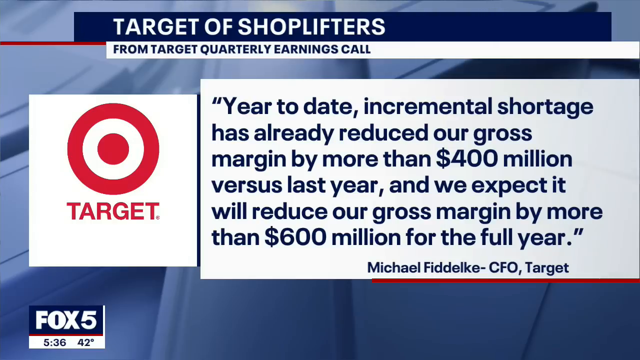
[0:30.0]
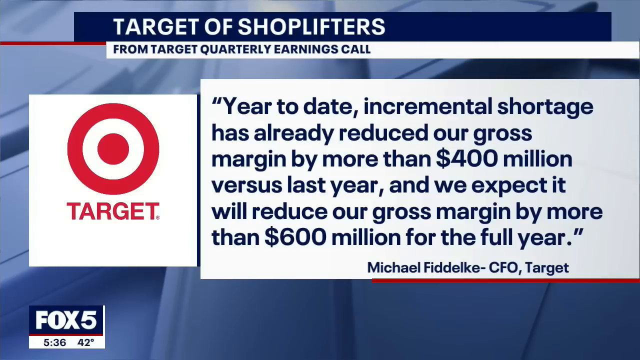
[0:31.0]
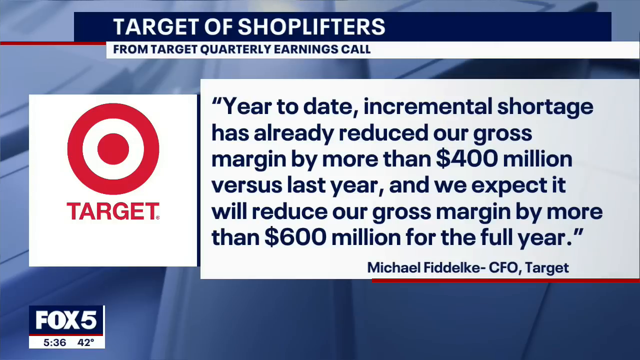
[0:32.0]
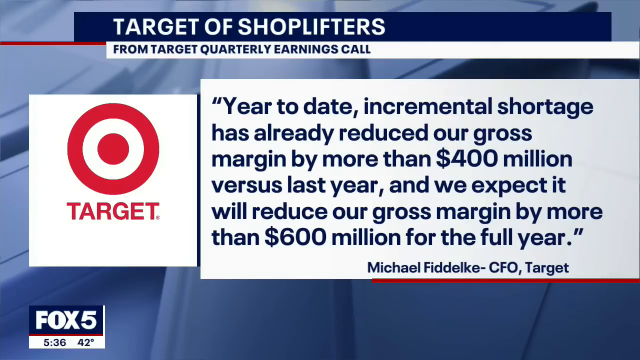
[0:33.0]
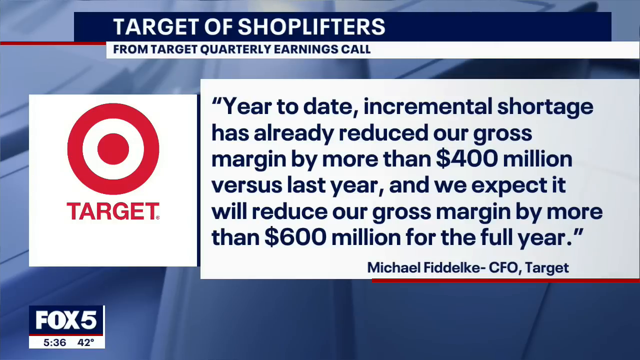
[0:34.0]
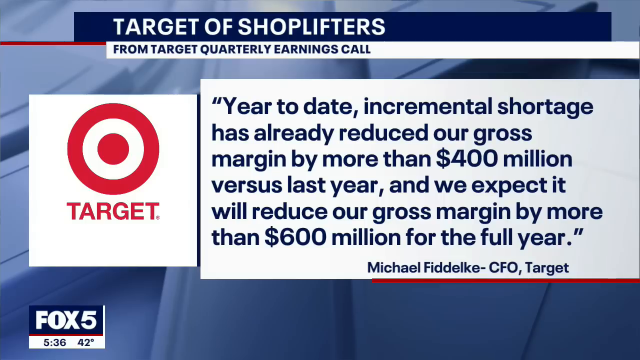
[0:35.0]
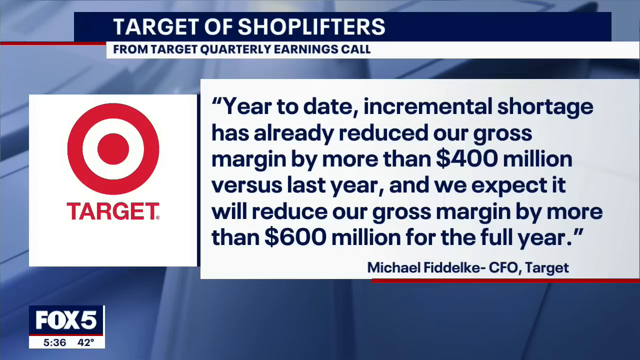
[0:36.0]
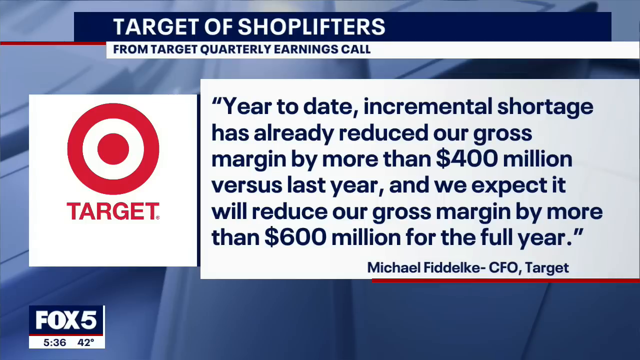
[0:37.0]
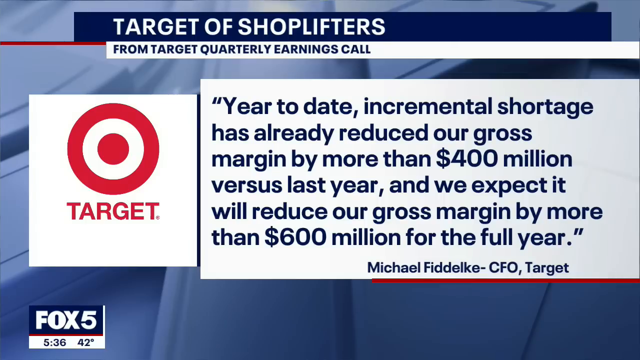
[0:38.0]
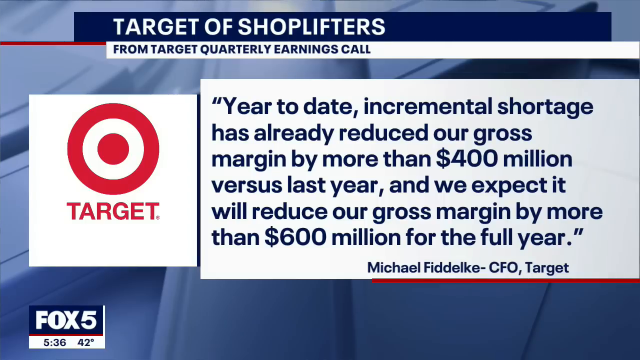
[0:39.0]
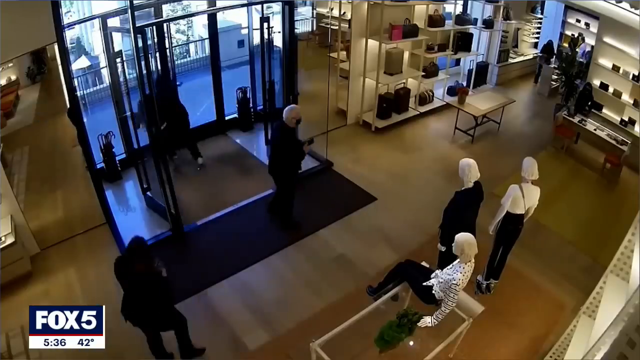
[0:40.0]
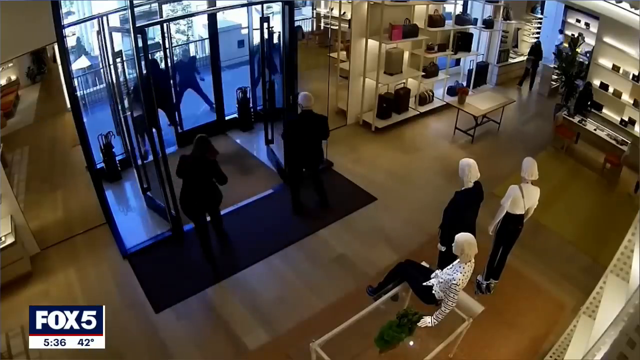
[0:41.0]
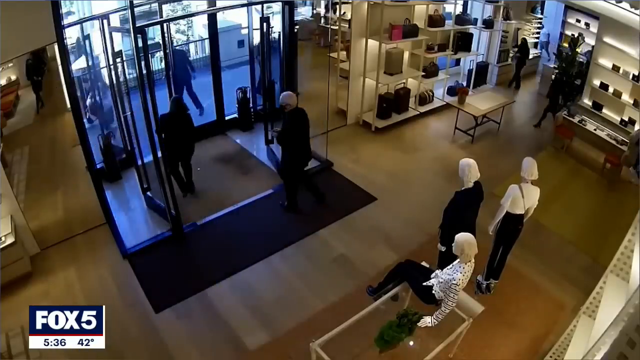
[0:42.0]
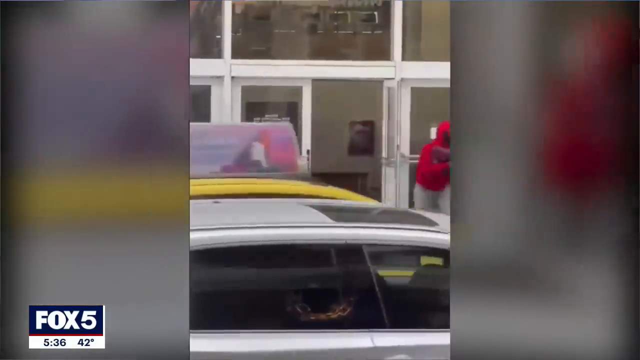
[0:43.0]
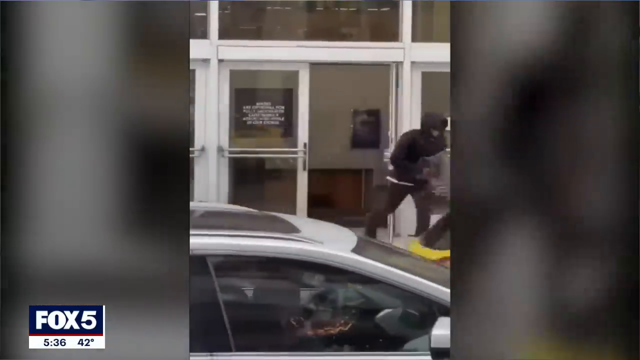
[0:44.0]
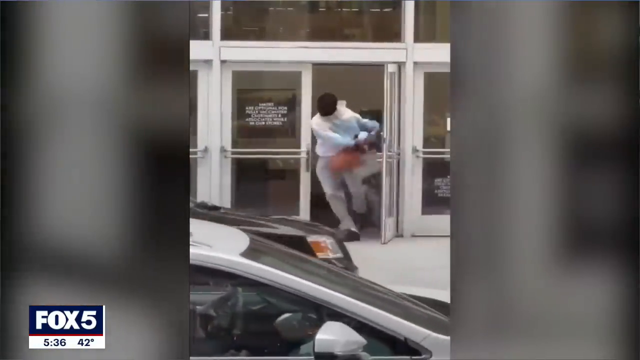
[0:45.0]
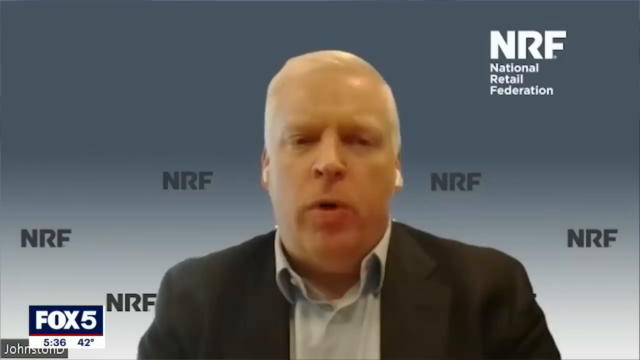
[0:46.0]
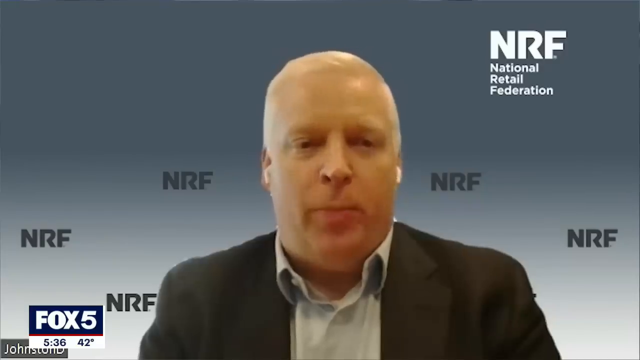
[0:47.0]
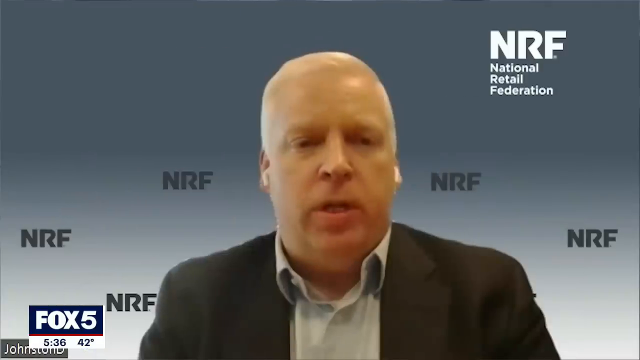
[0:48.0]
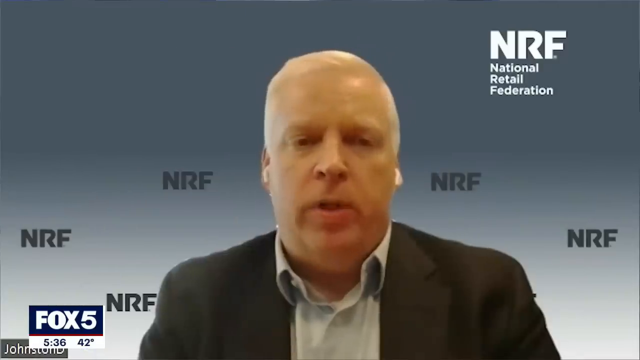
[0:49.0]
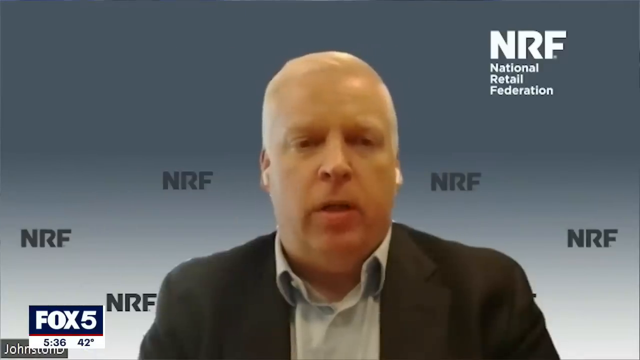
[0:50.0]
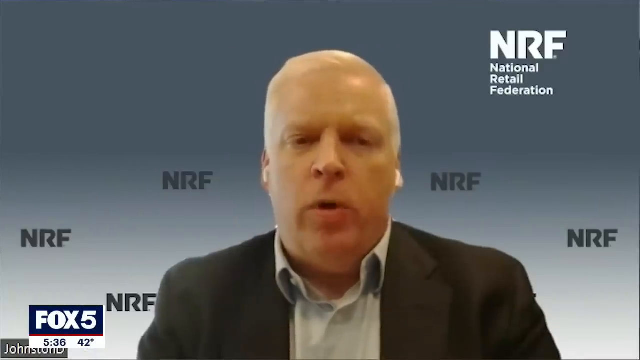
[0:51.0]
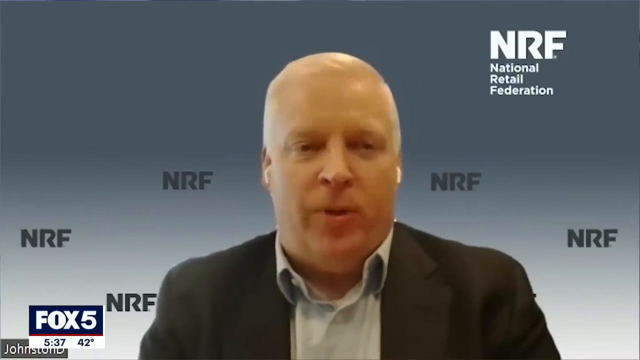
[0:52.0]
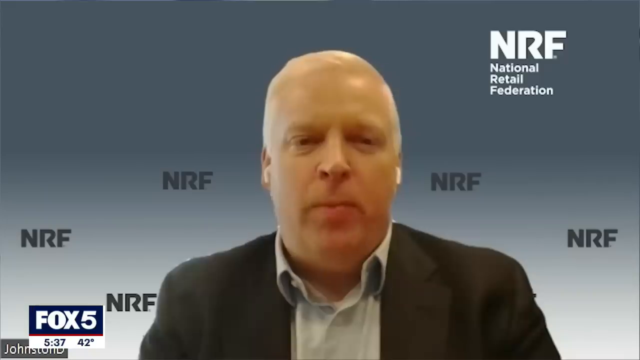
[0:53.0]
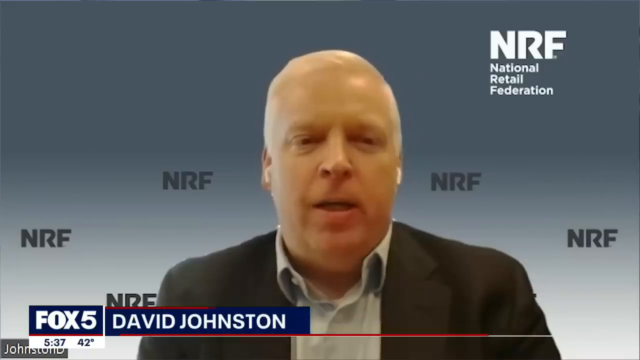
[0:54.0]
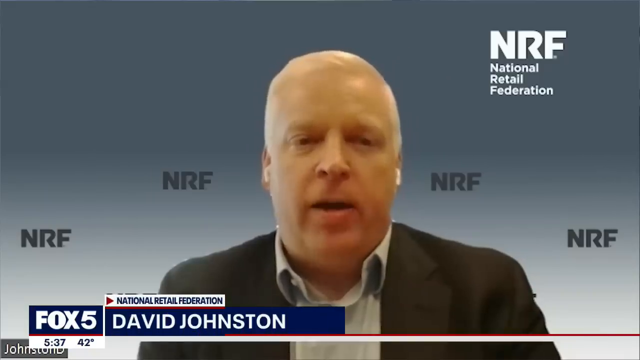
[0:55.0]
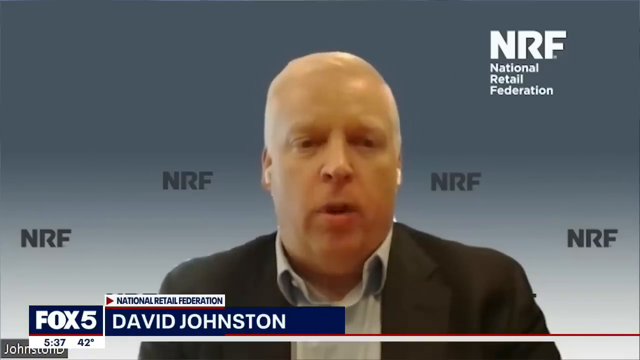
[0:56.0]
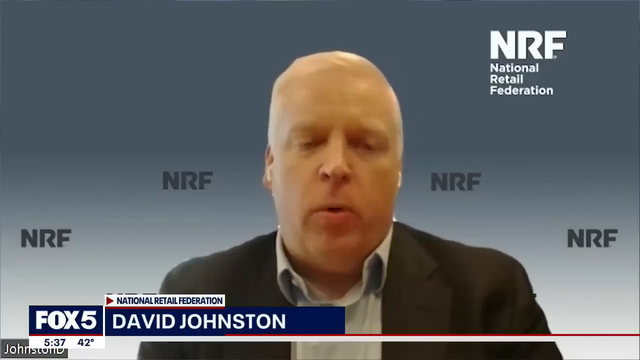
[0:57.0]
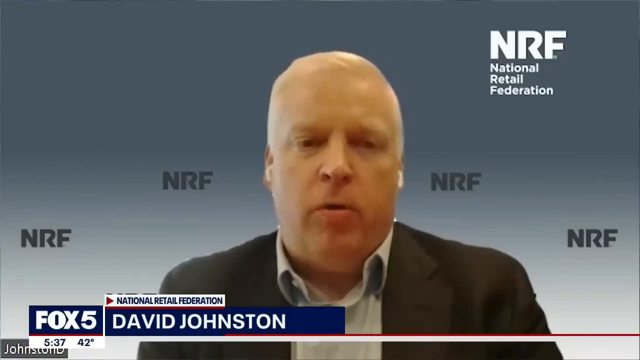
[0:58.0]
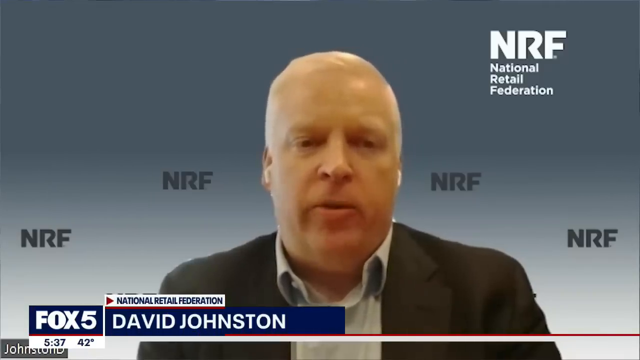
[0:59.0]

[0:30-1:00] A headline at the top reads "Target of shoplifters," and just below it reads "from Target quarterly earnings call." The Target logo in red is on the left side of the screen, and to the right is a statement from Michael Fidelke, the CFO of Target. The quote reads: "year-to-date incremental shortage has already reduced our gross margin by more than 400 million versus last year, and we expect it will reduce our gross margin by more than $600 million for the full year." After the quote is displayed for several seconds, footage from inside a dimly lit store shows people dressed in dark clothes running out of the store very rapidly. The scene moves to the parking lot, where outside footage shows people wearing masks, holding items in their hands, running very quickly out of the doors and away. Then a white man, David Johnson, dressed in a dark suit with a colored shirt, speaks directly to a camera in front of a plain background, with the acronym NRF, for National Retail Federation, behind him. The Fox 5 logo is in the lower left corner.